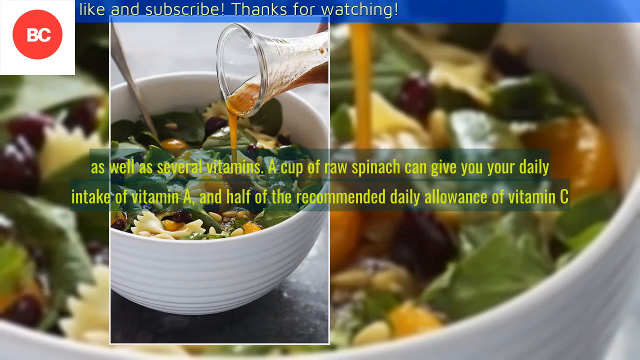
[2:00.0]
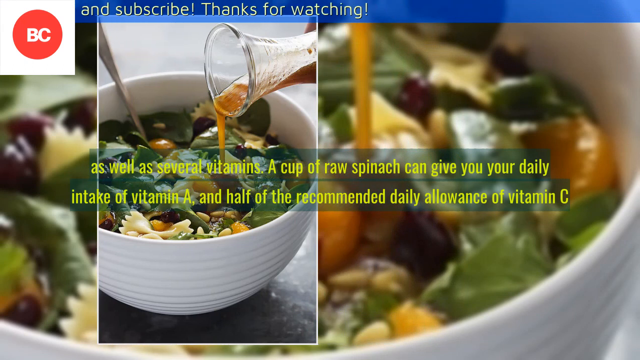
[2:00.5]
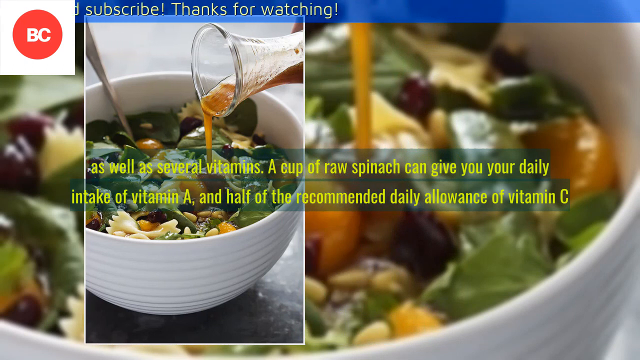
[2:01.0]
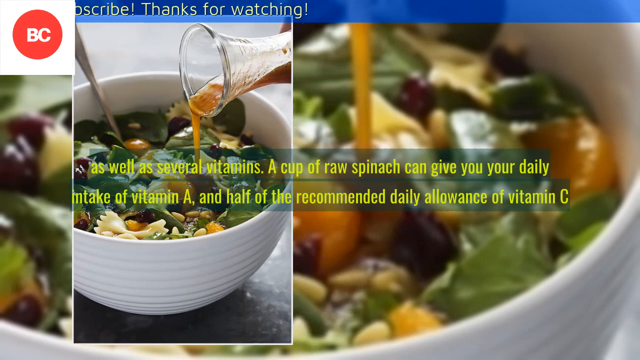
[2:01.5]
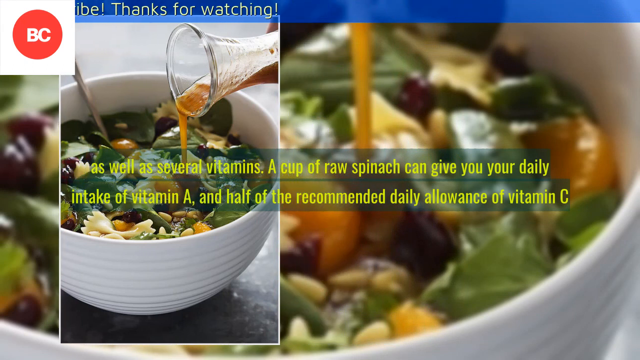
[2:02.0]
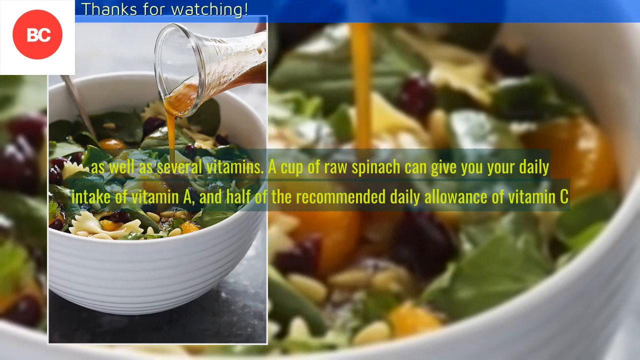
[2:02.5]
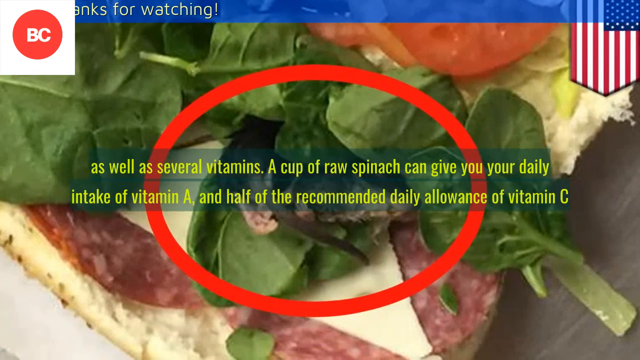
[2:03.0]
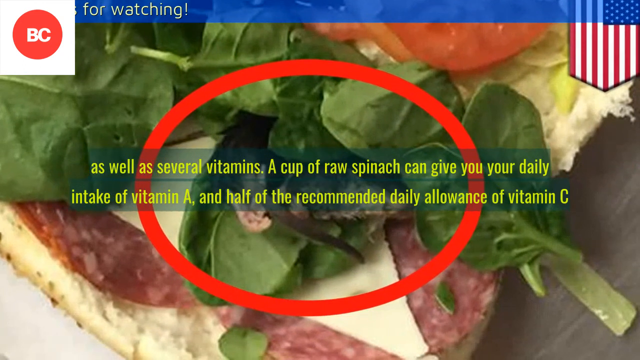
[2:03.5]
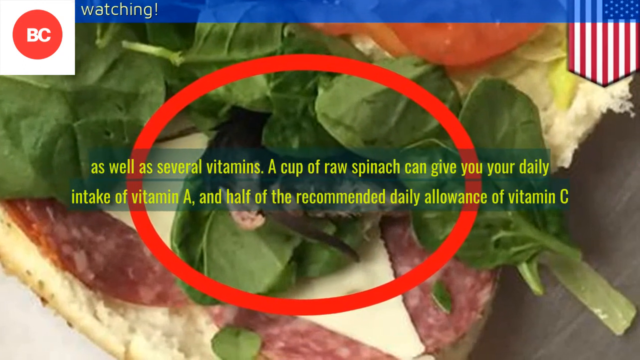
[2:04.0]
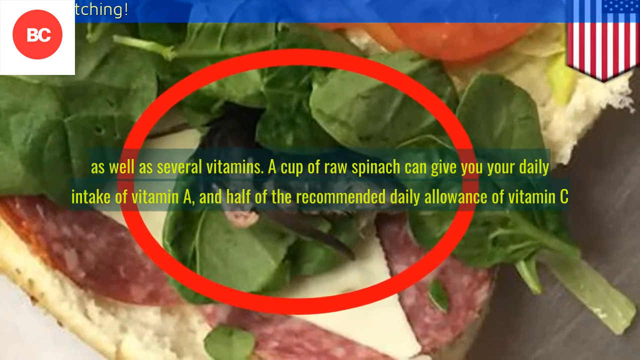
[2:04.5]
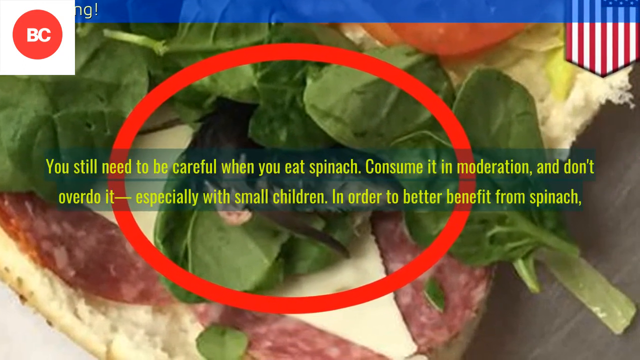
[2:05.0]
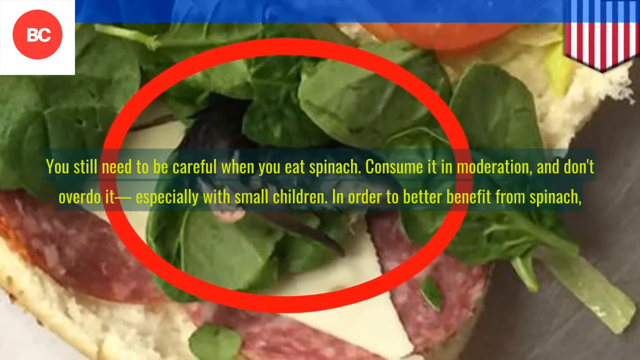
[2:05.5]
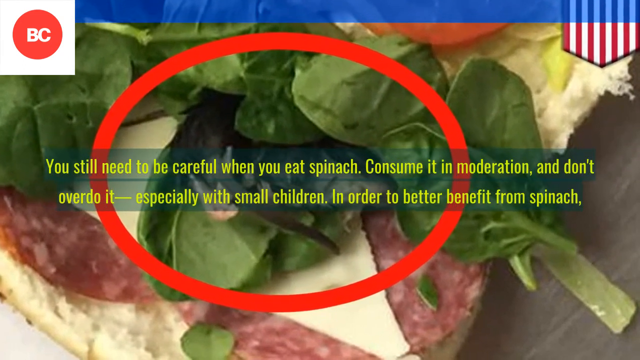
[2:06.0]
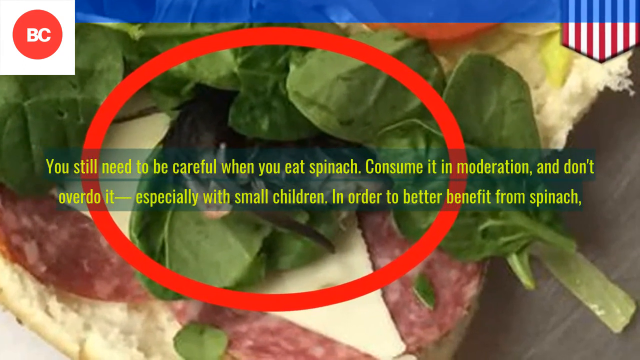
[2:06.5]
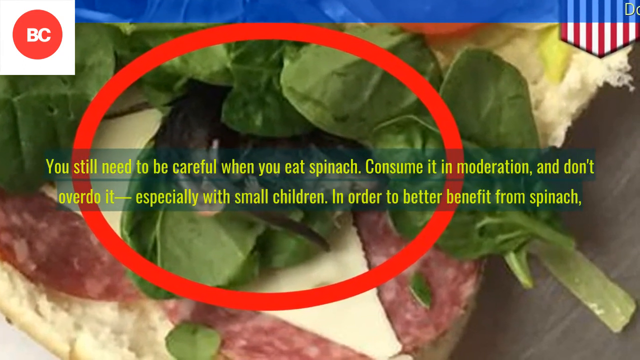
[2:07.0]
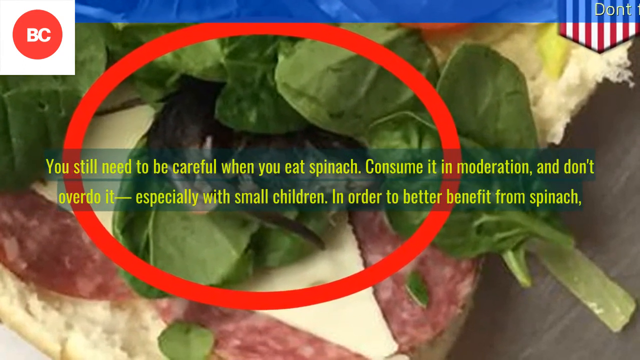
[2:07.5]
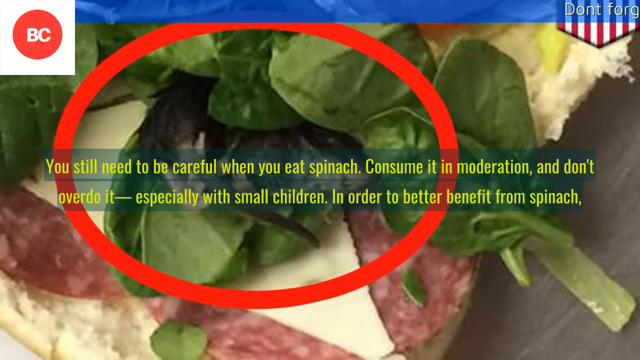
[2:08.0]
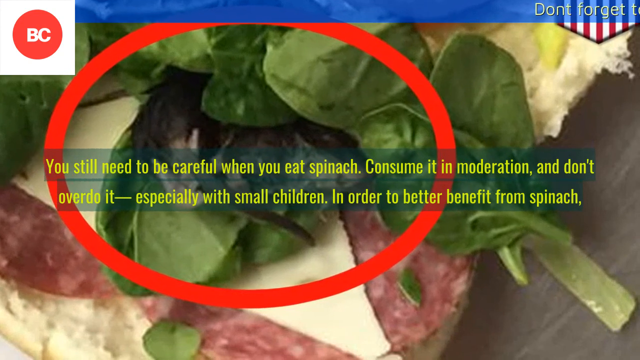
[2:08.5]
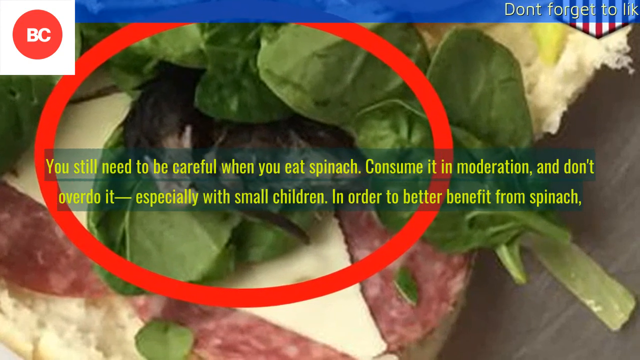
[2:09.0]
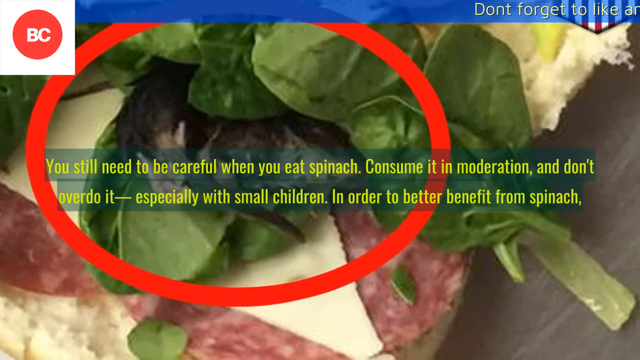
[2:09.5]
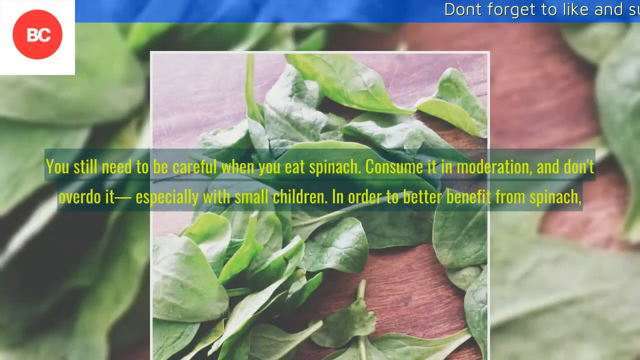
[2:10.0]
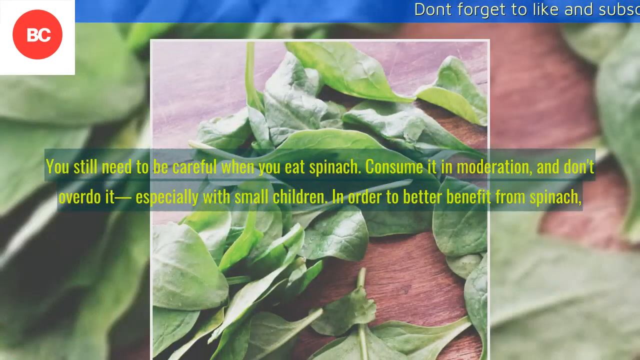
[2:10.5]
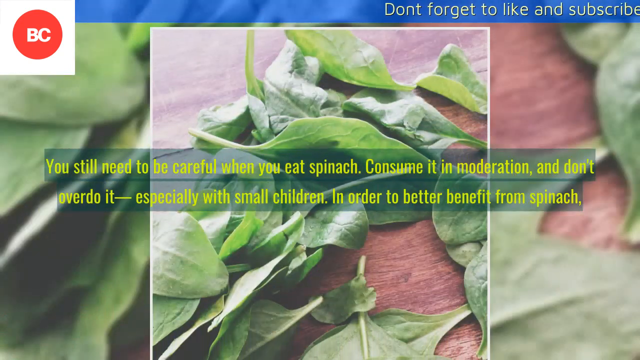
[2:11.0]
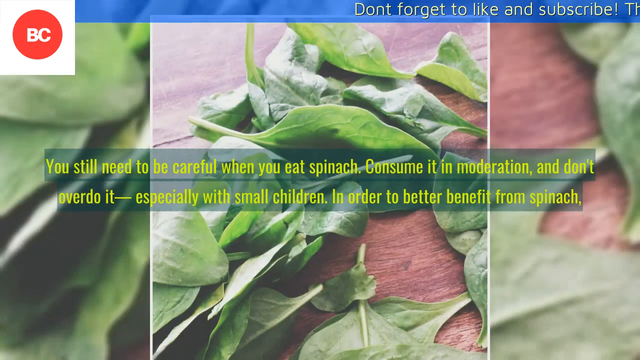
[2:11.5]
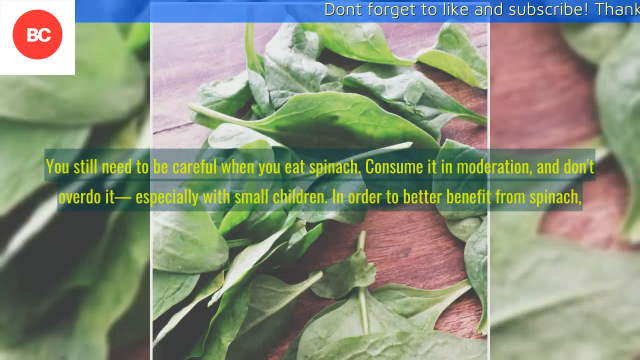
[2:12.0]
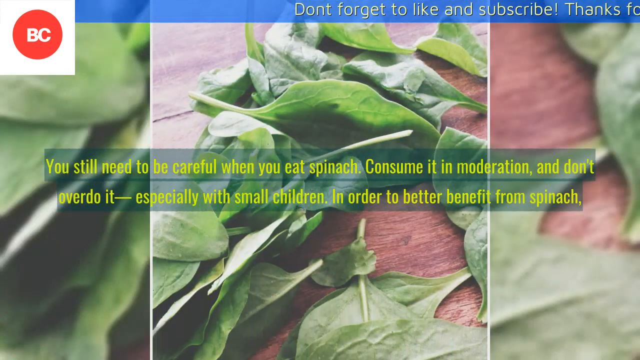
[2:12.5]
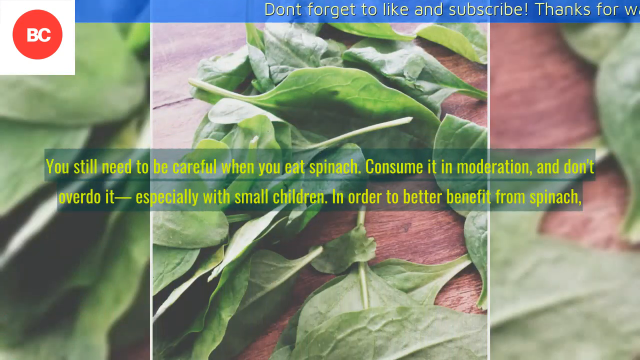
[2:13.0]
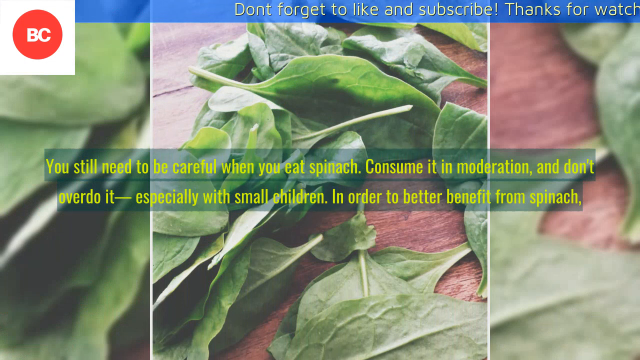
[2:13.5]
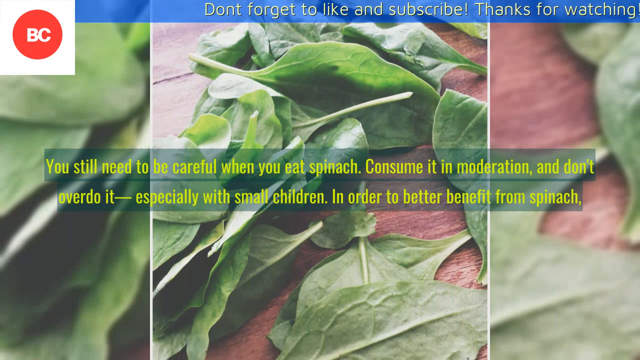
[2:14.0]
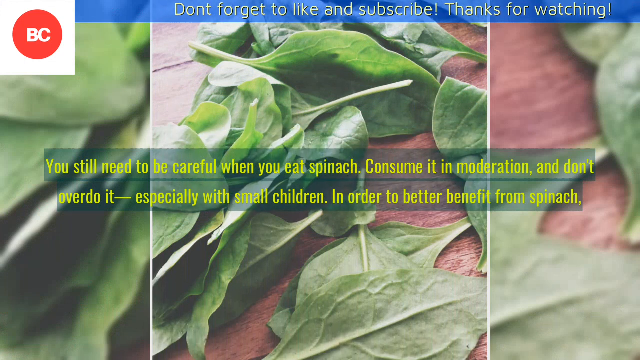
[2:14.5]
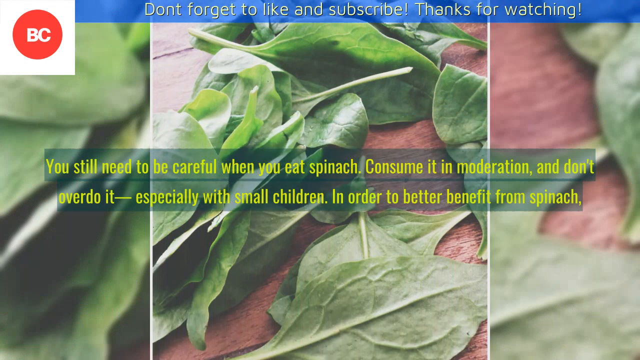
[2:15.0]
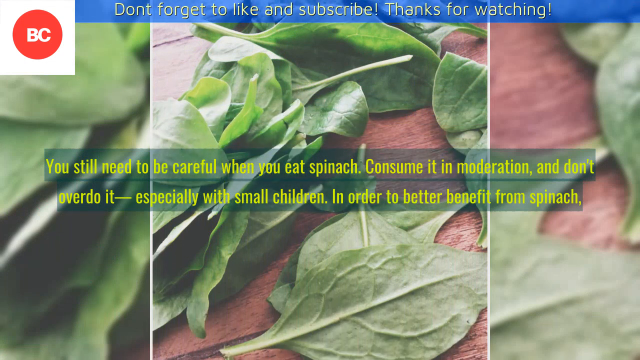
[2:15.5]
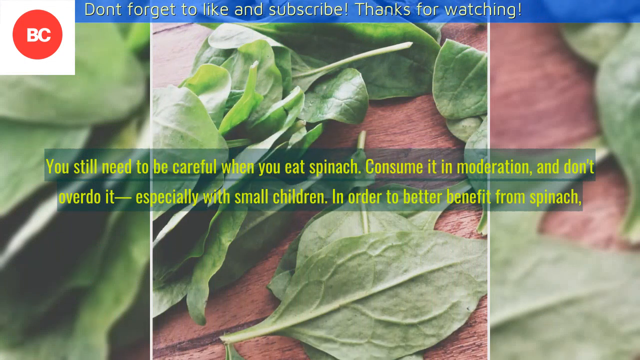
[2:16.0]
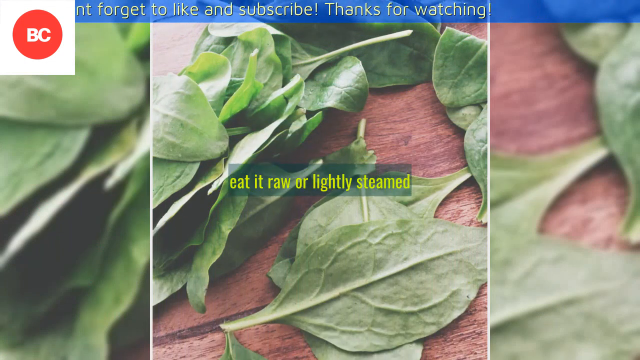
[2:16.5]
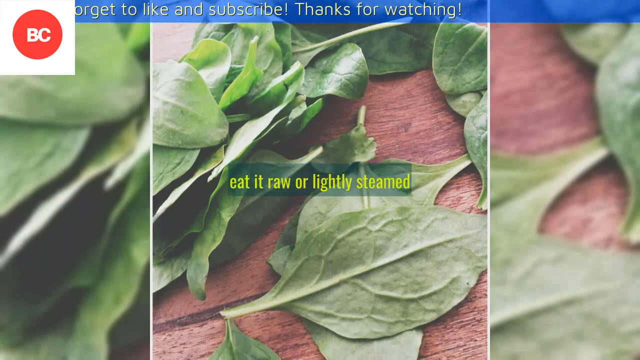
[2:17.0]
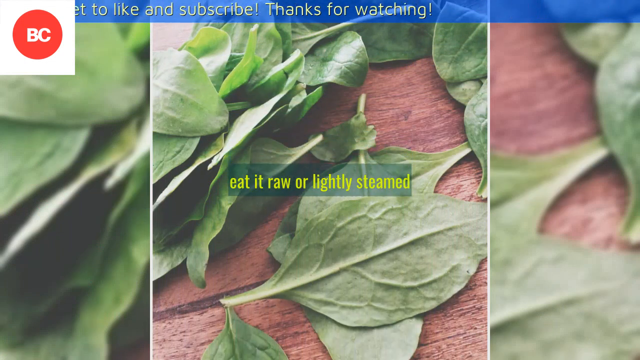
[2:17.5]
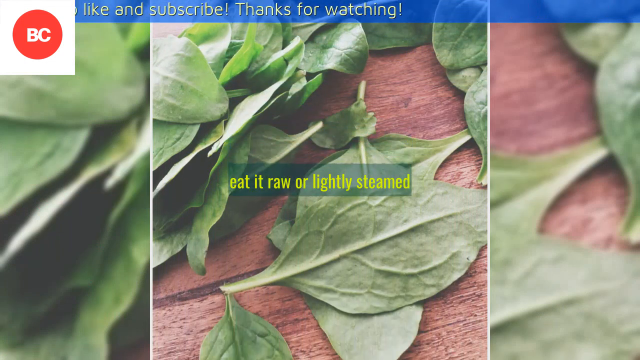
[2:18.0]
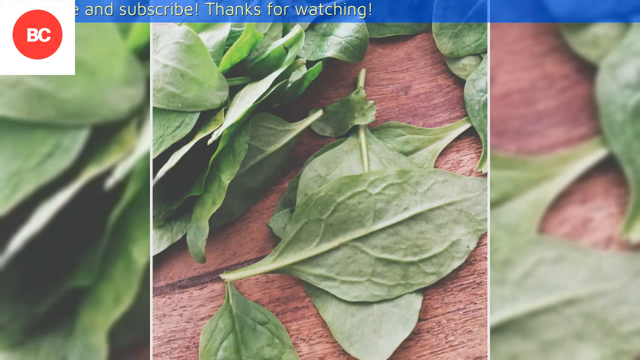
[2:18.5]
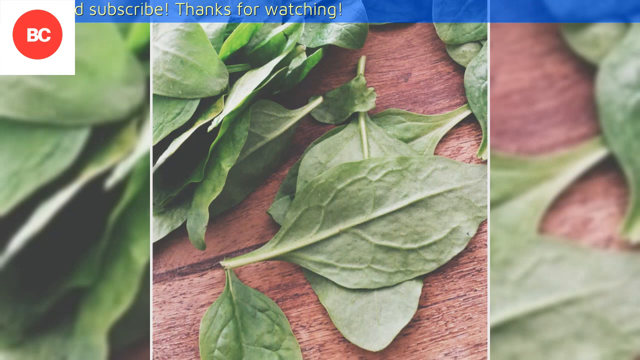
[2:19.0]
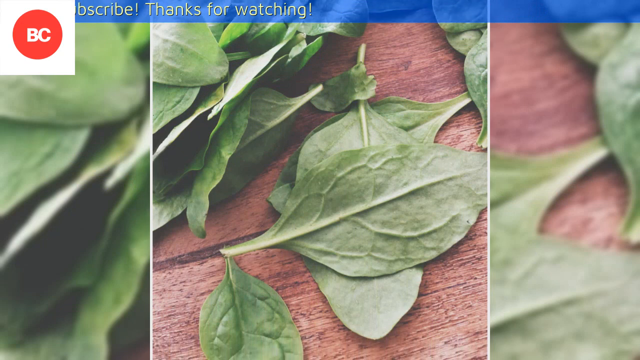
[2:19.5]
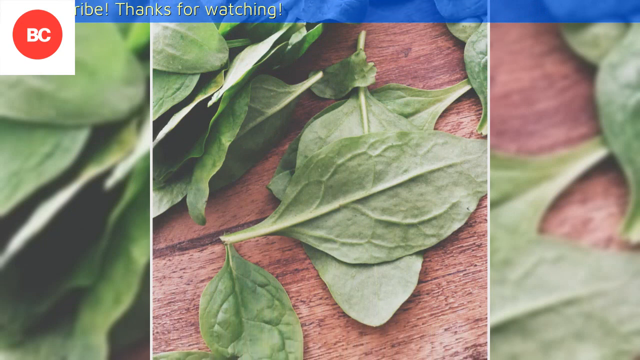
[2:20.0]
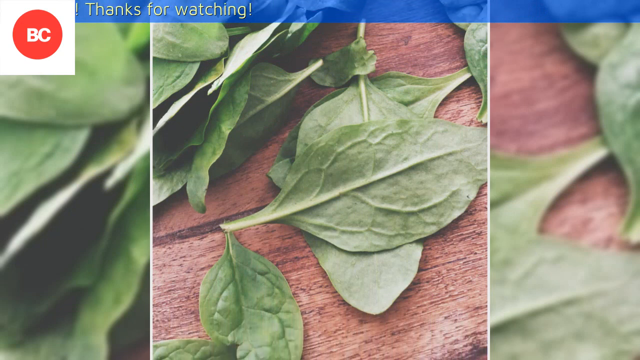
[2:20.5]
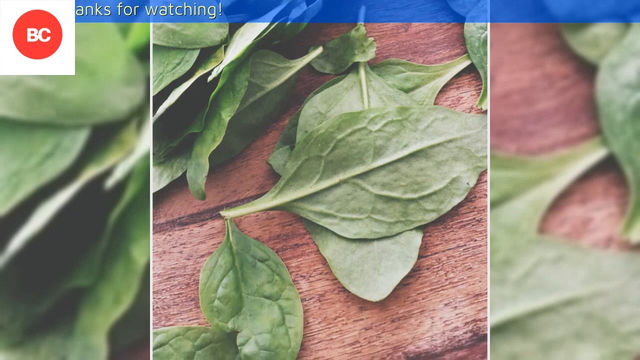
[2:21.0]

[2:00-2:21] The image reaches the left side and suddenly switches to a new image of a piece of bread with pepperoni, spinach and tomato, with an insect hidden in the spinach circled in red. In the top right there is an American flag. The image zooms in on the insect, and then a new image of spinach pops up, panning from top to bottom and showing many spinach leaves, revealing more of the image as it moves down. The background is a zoomed-in version of the image on screen. Behind the spinach there is a wooden backdrop, and on top many uncooked spinach leaves are spread around.